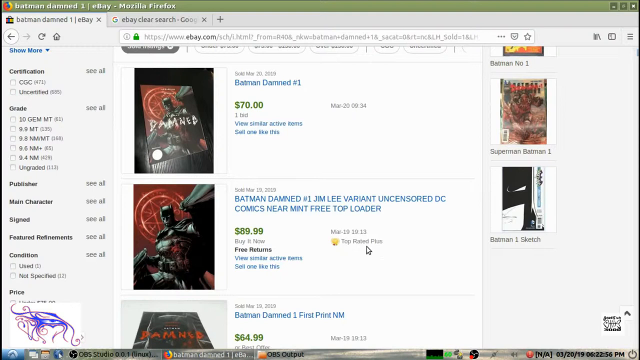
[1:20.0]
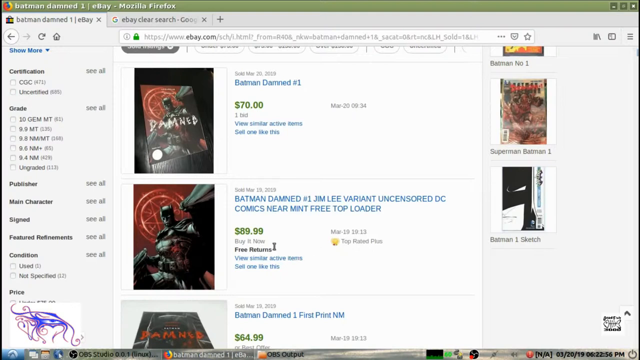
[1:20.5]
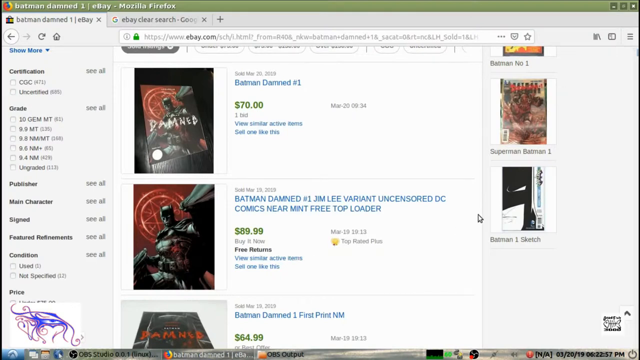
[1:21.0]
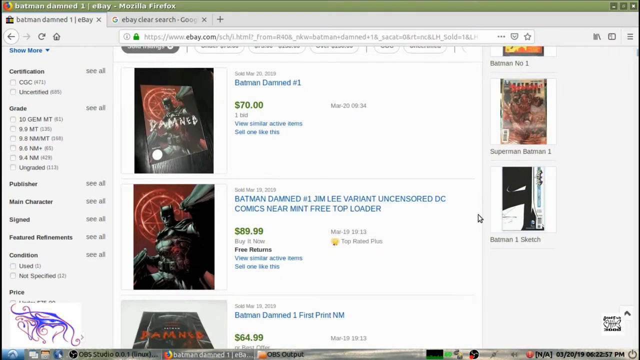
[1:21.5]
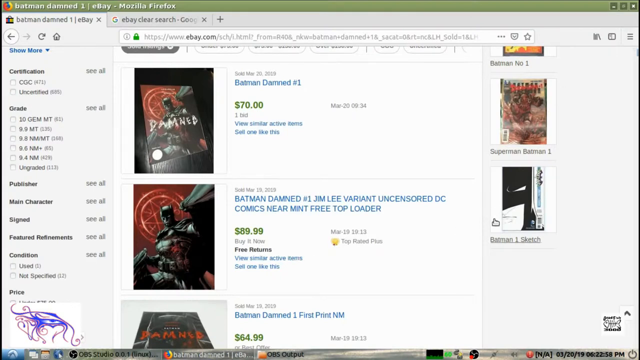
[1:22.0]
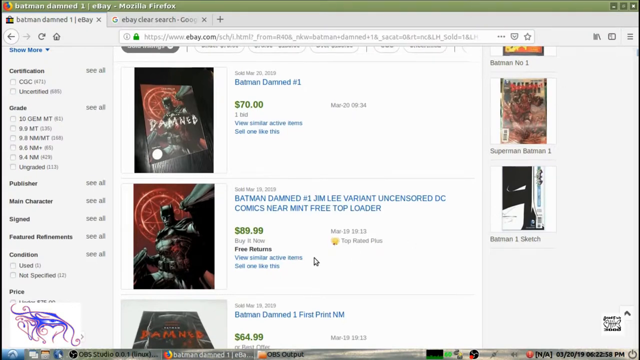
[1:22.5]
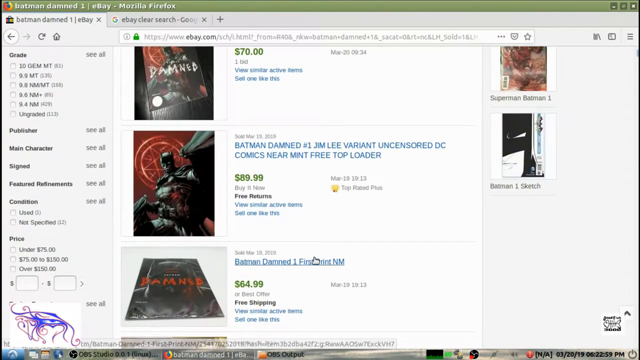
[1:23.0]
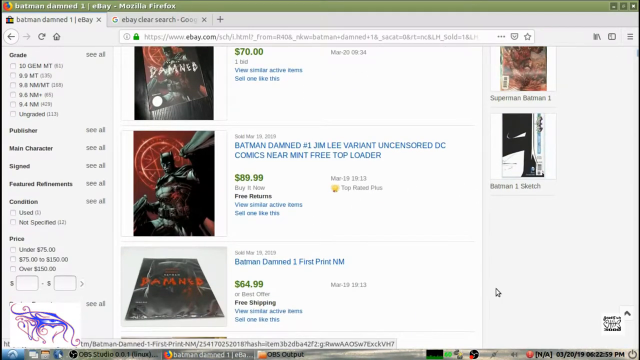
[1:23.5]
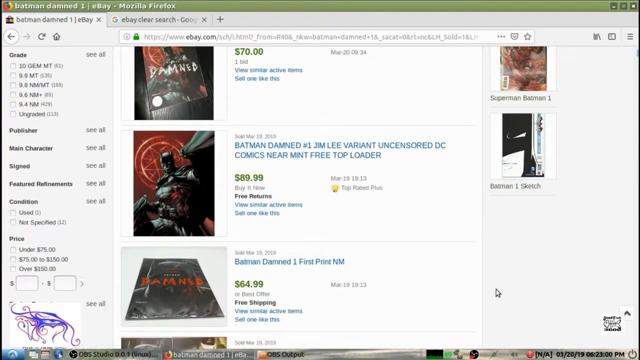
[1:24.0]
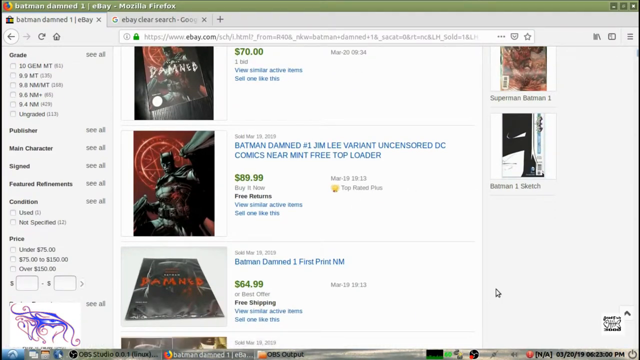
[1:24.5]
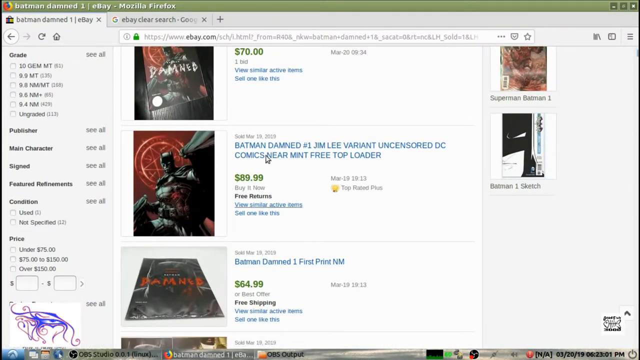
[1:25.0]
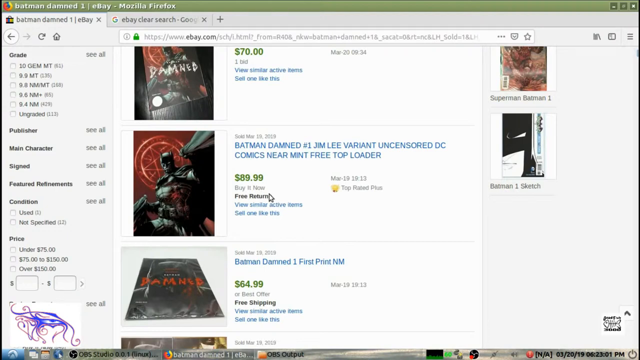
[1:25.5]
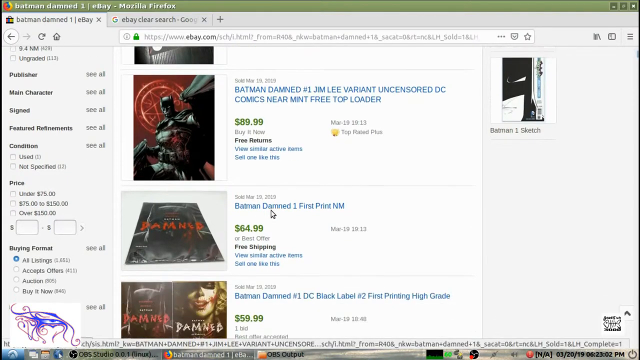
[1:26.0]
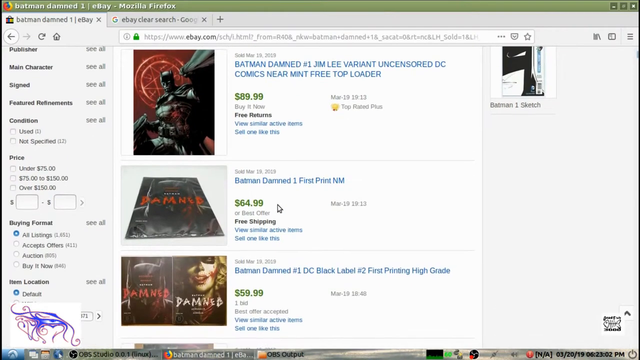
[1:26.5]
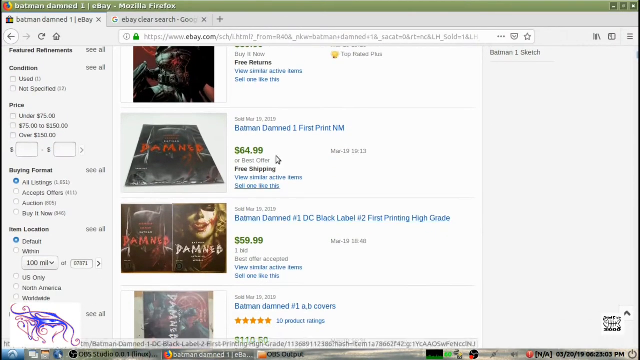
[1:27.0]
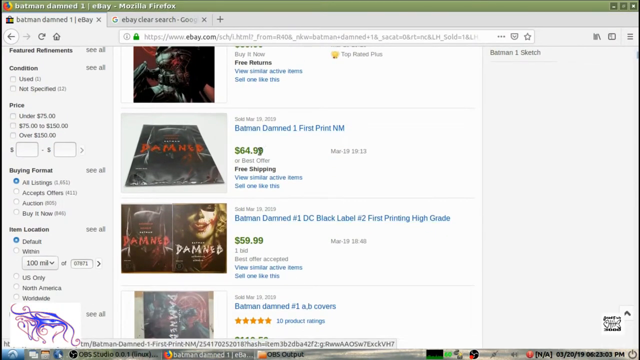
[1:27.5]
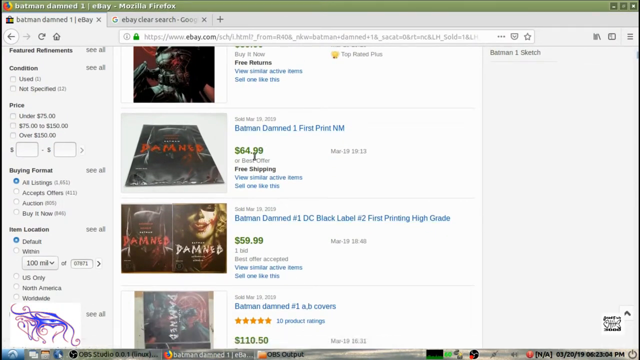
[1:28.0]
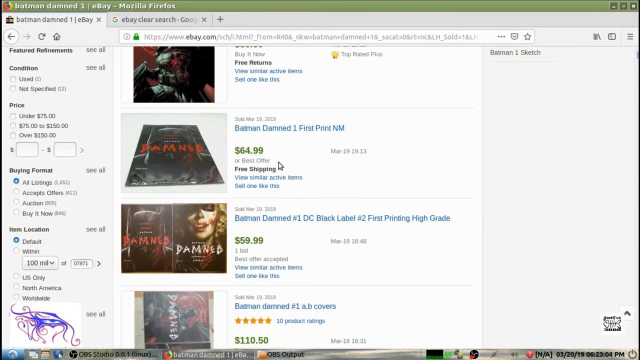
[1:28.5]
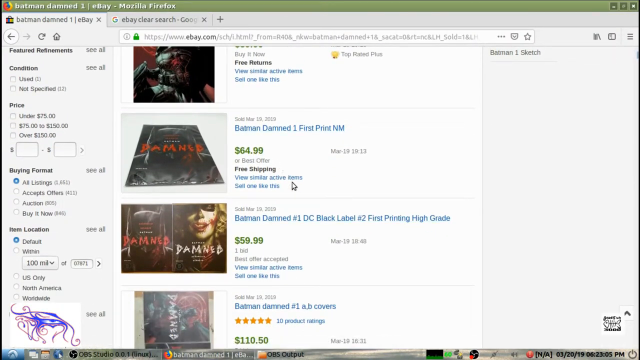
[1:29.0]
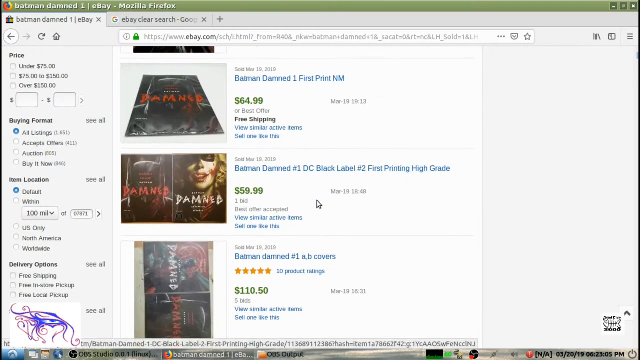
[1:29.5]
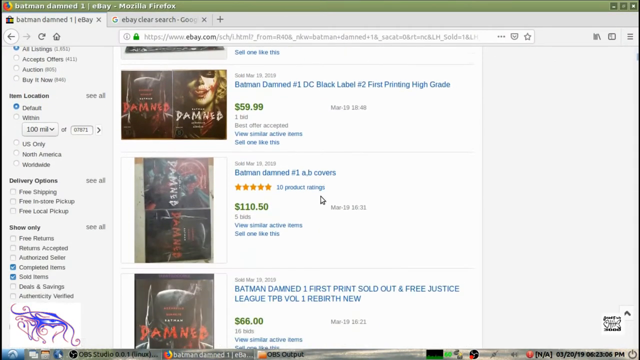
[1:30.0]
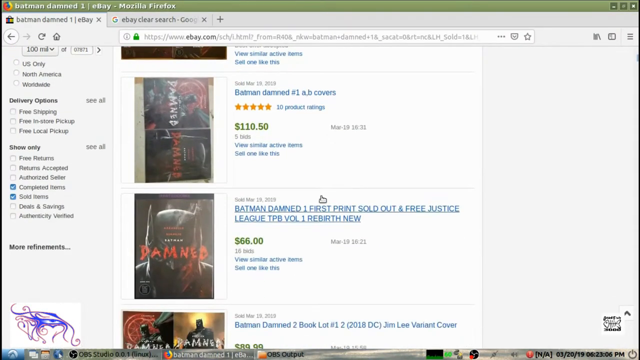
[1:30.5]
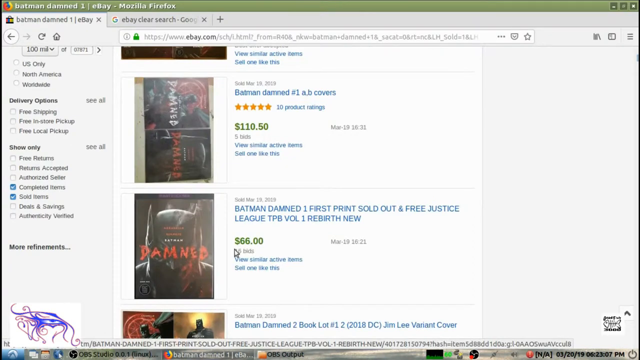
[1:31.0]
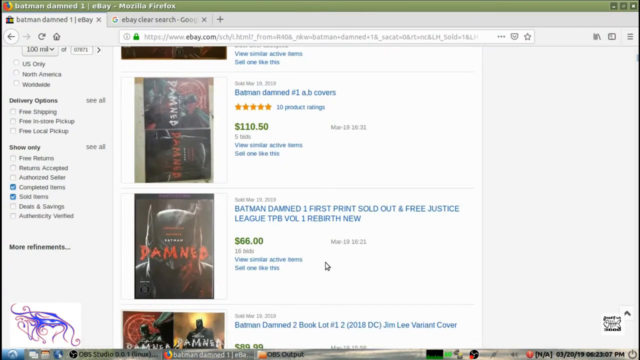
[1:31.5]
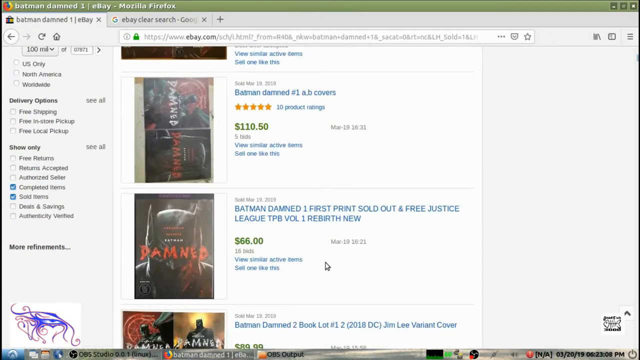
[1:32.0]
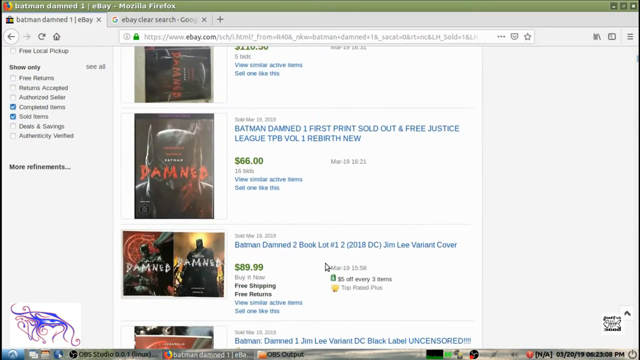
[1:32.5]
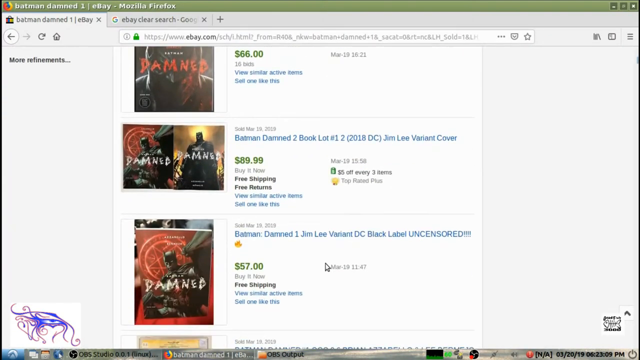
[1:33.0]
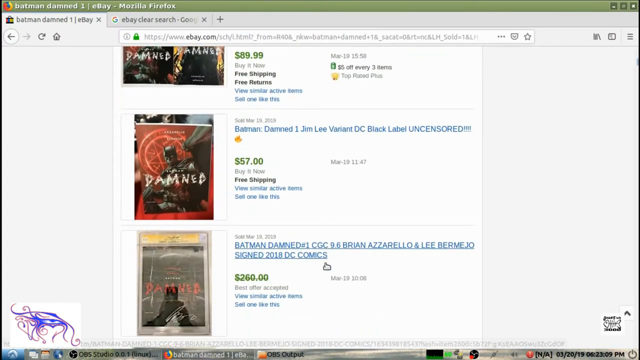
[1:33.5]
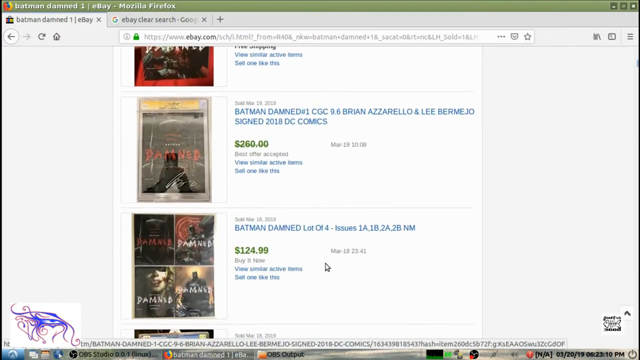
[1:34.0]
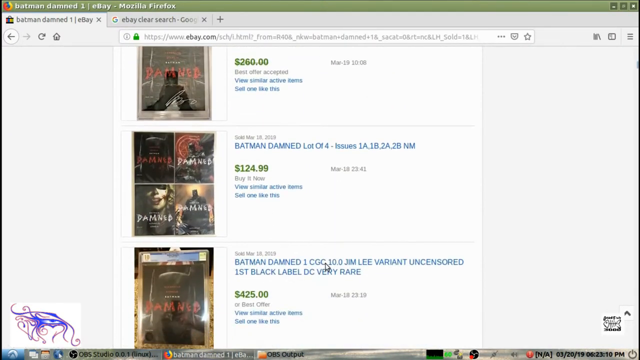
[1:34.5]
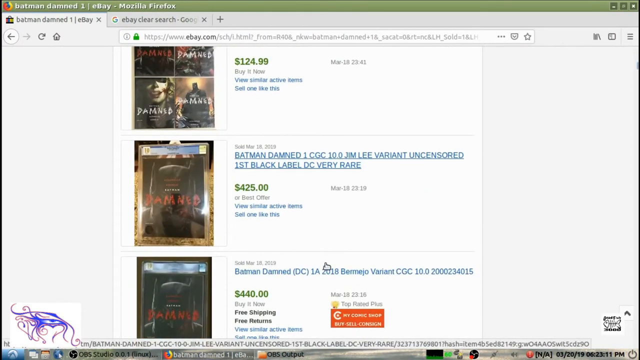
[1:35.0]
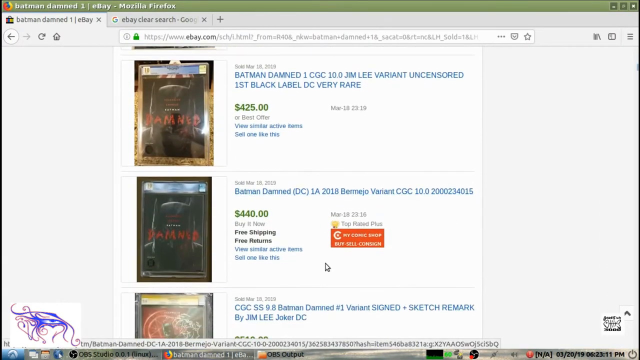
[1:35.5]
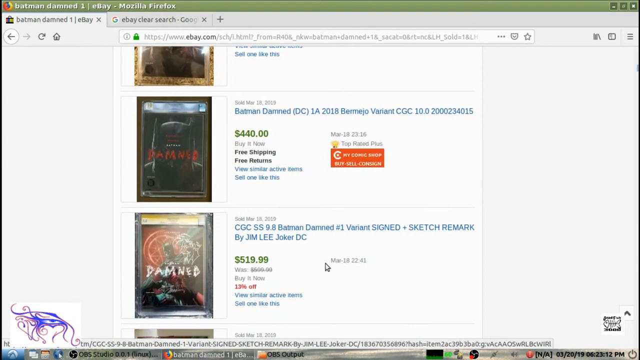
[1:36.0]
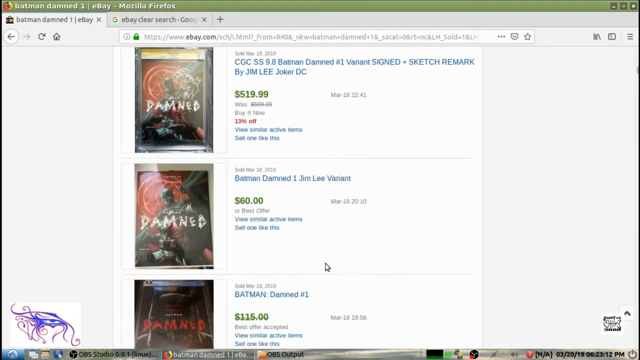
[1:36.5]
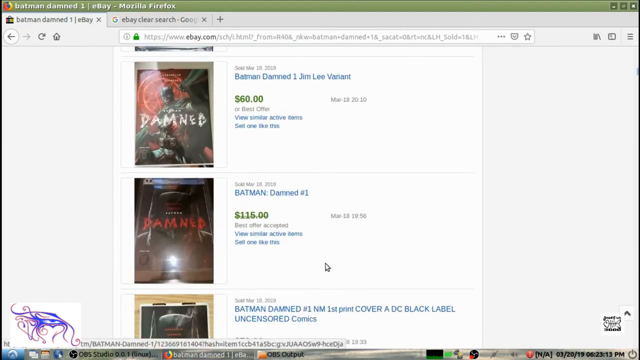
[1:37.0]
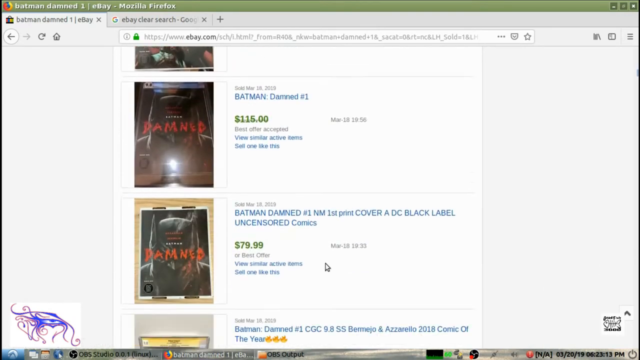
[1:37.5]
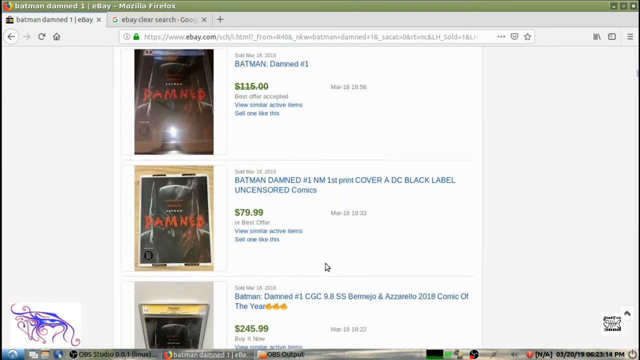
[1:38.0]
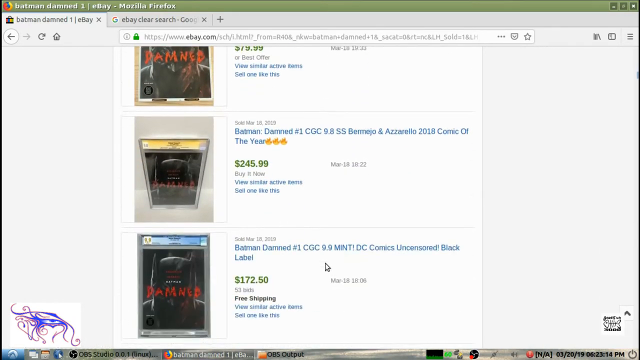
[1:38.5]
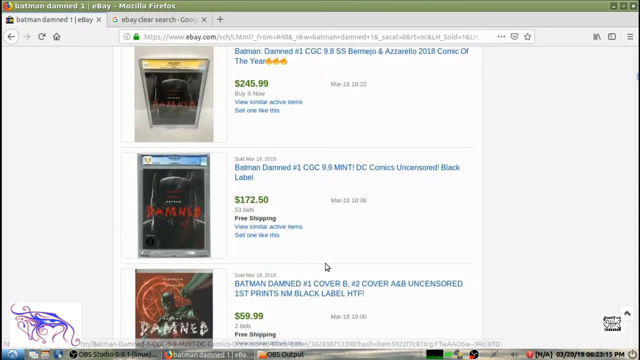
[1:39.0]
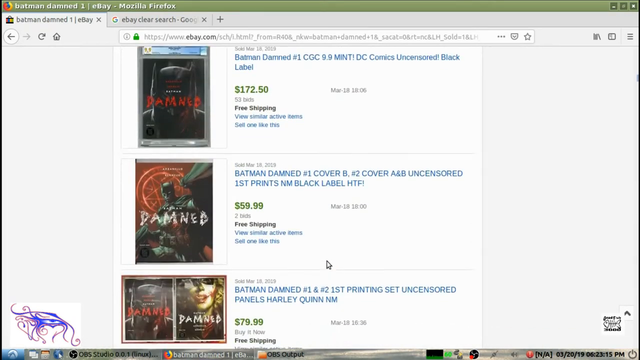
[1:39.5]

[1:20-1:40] After hovering over the second item, the user scrolls down to a third item and hovers over it. It is called "Batman Damned 1 First Print," priced at $64.99 with free shipping. As the user keeps scrolling, more comic books appear, first two that have been sold and then more results of sold comic books, until all of the comic books shown are sold. Their pictures on the left are all faded, indicating they are sold, and their descriptions carry the word "sold."